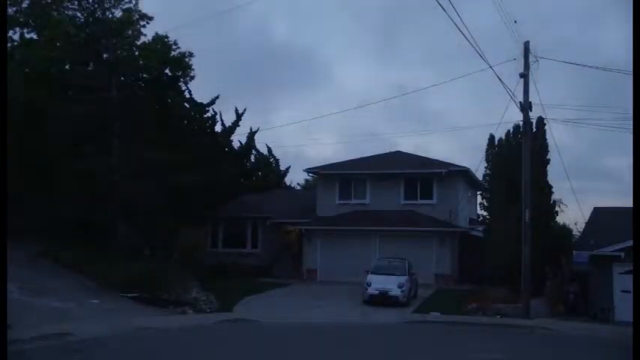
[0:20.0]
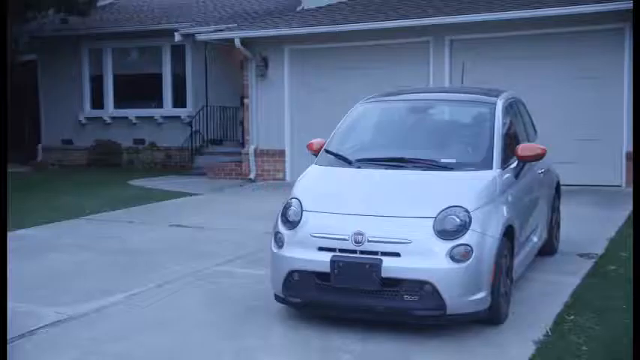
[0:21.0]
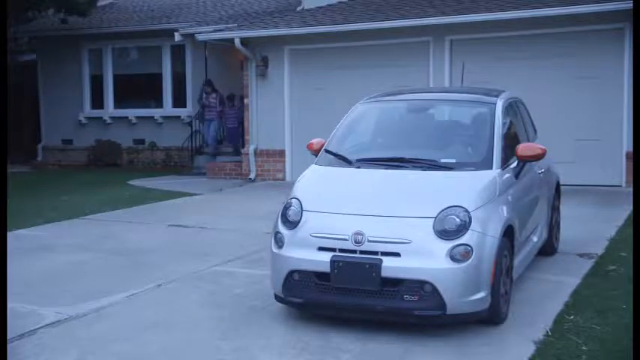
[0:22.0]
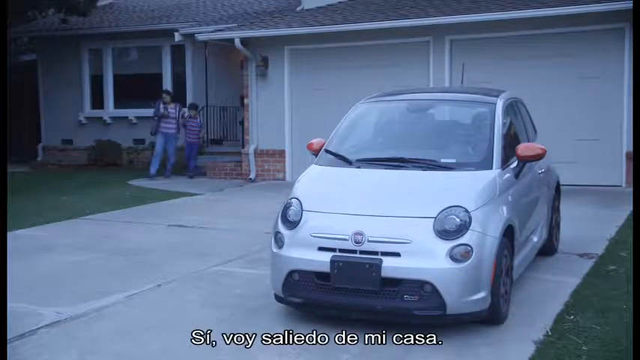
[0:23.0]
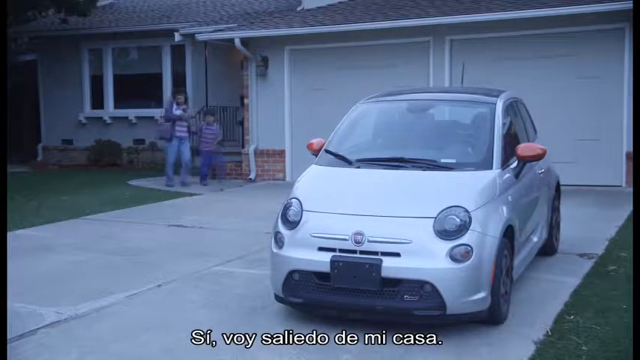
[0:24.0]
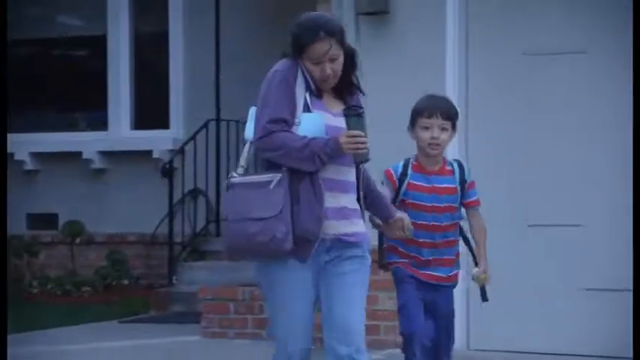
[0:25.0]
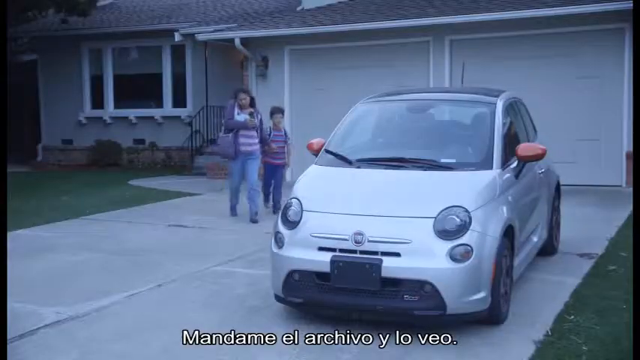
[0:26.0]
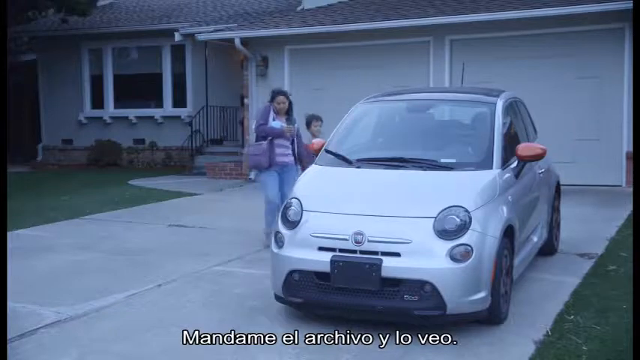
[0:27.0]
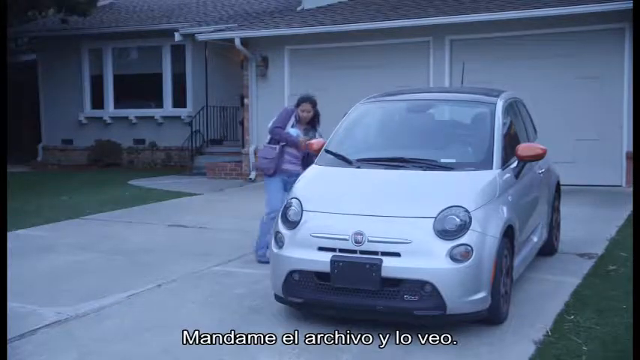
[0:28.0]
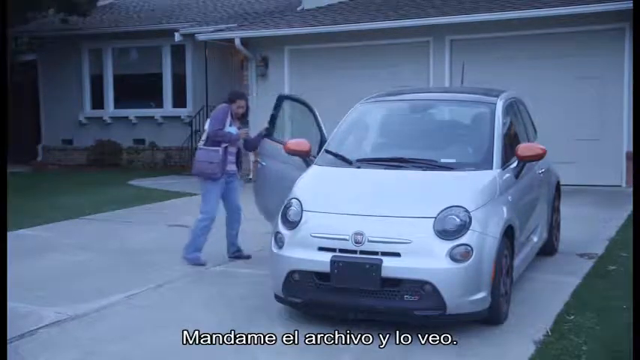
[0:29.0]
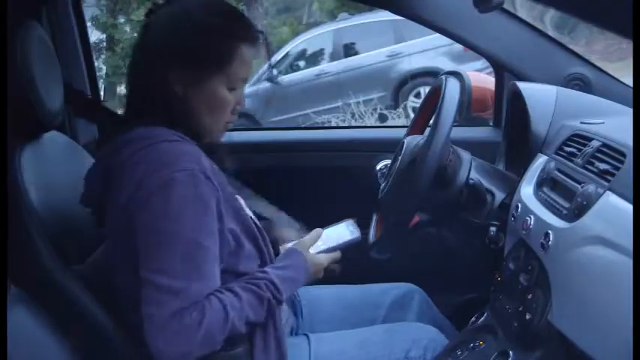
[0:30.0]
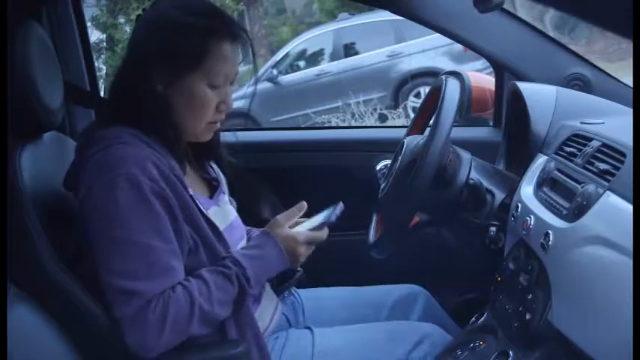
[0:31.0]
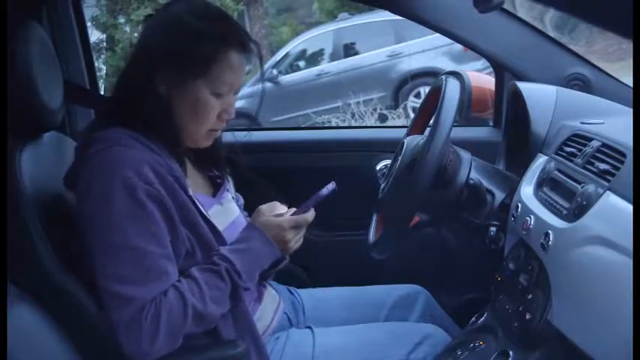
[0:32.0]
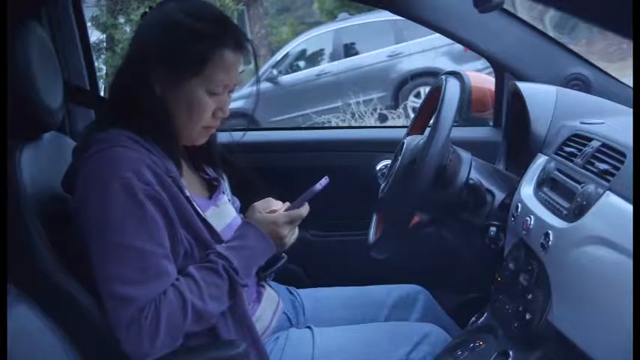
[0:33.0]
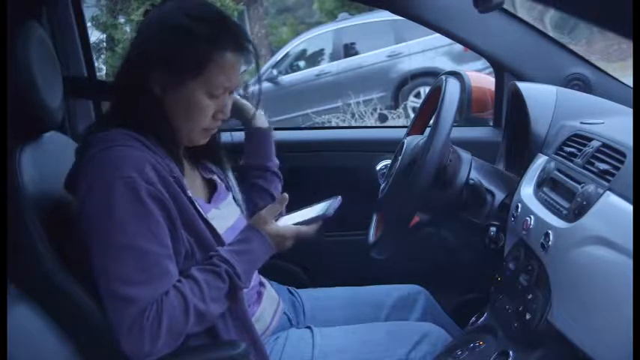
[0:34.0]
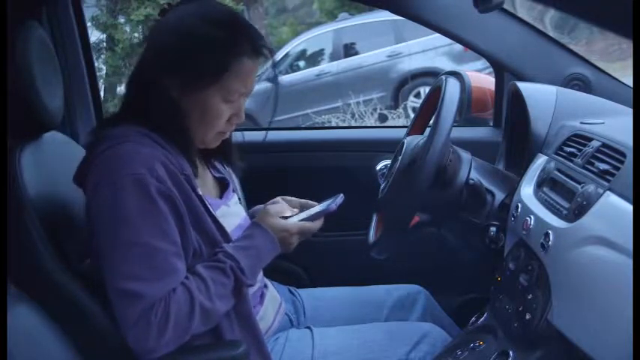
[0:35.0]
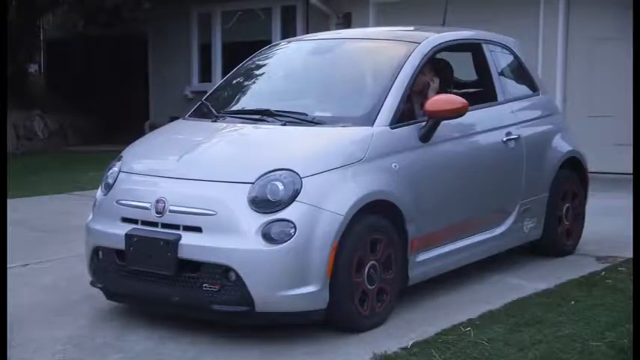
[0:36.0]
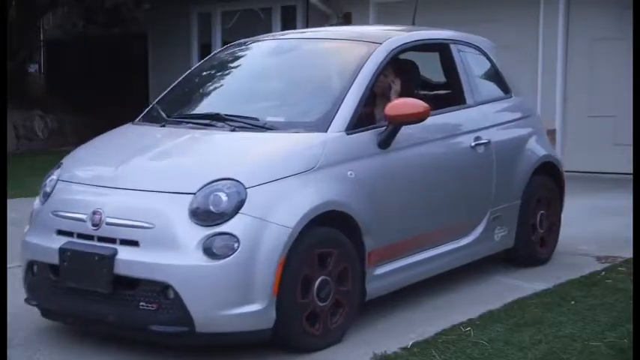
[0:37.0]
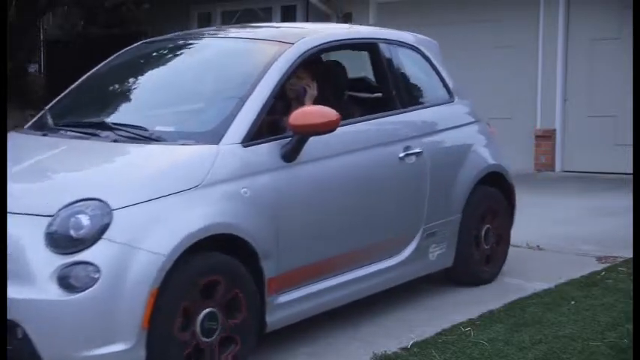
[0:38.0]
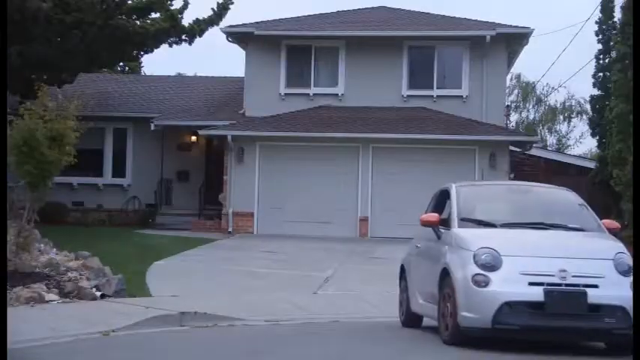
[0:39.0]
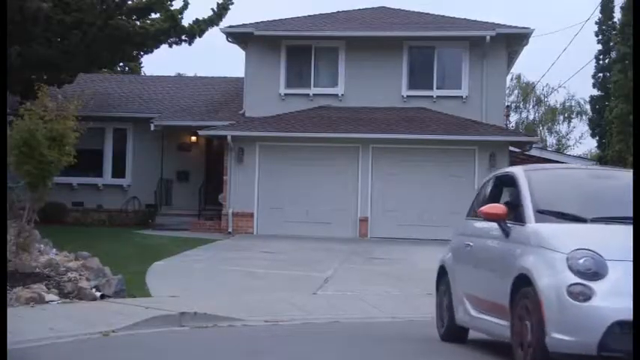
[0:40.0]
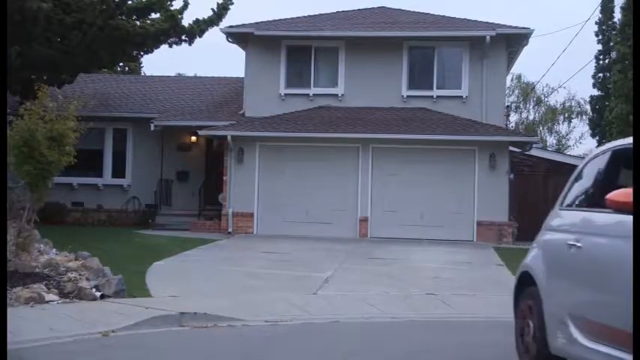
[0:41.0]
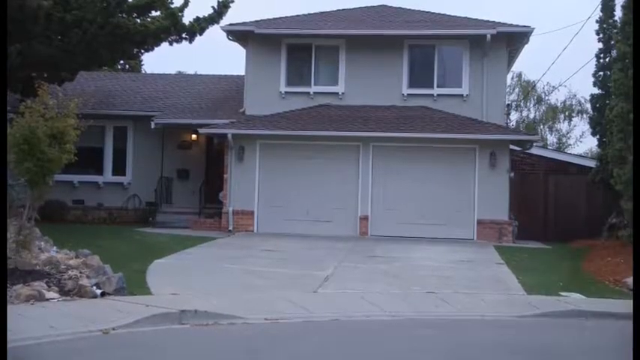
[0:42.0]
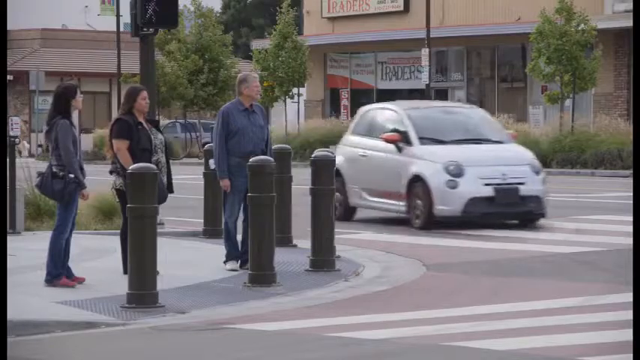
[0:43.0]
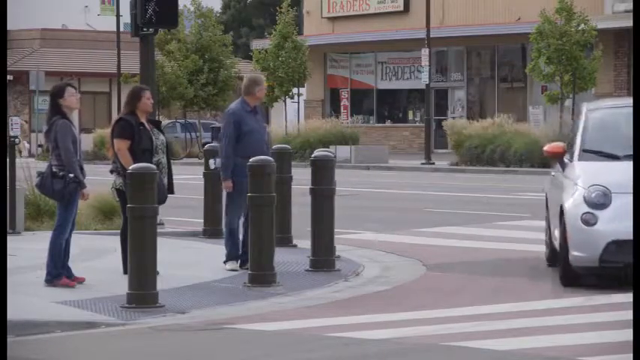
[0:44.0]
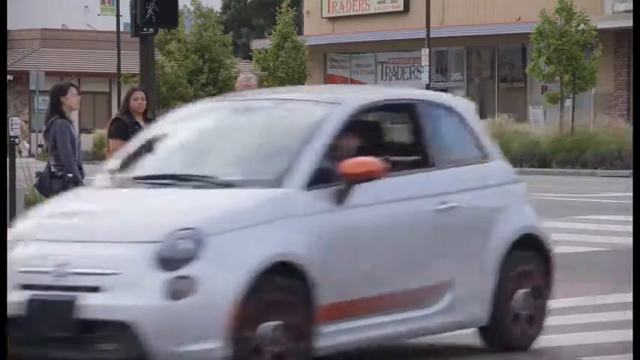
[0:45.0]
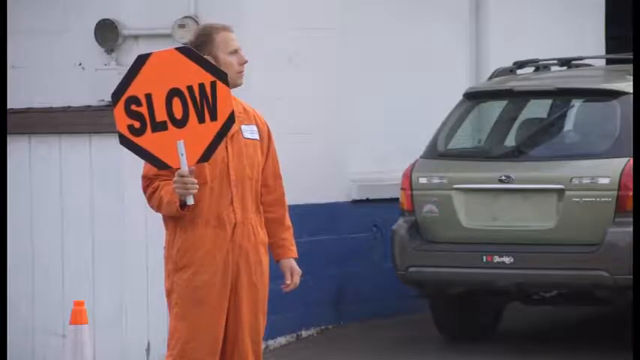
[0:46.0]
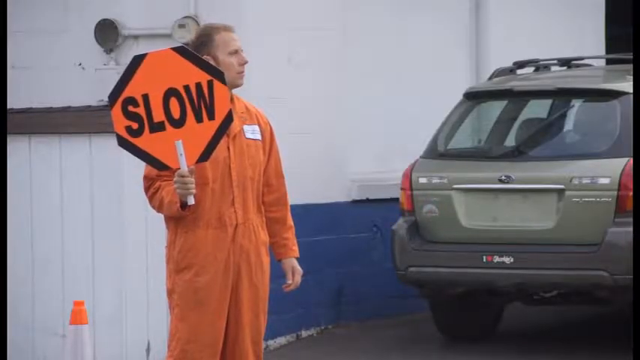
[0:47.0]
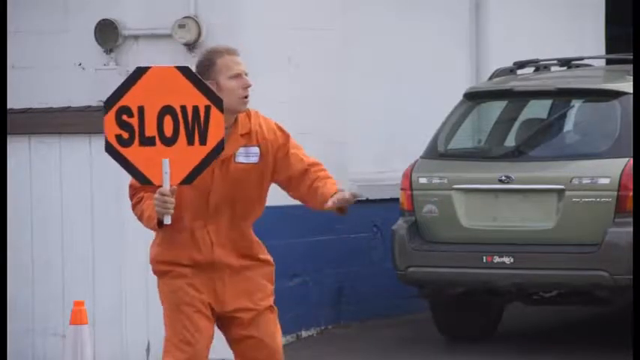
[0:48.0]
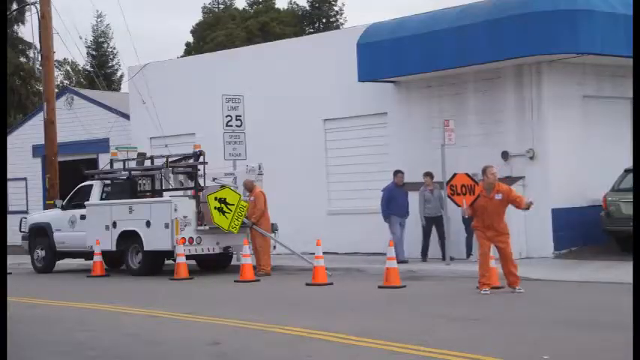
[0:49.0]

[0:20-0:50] A two-story house has a small car parked in front of it. A lady comes out of the house holding her son's hand while on the phone. She appears to be in a rush as she opens the door for her son to get in. In the car she texts or replies to a message on her cell phone; she is in the process of putting on her seatbelt but lets it go. She drives off while on the phone and speeds through a curve in the road, where three people look at her with concern as she speeds past them. The video then transitions to a man wearing an orange uniform with a slow sign, signaling her to slow down, but she does not slow down.